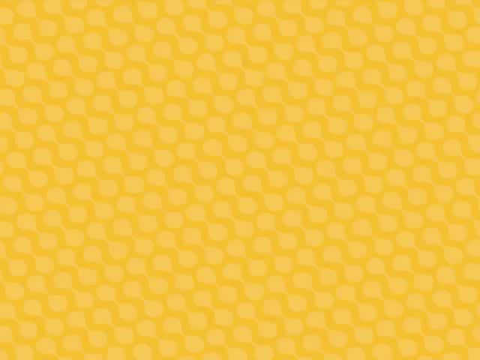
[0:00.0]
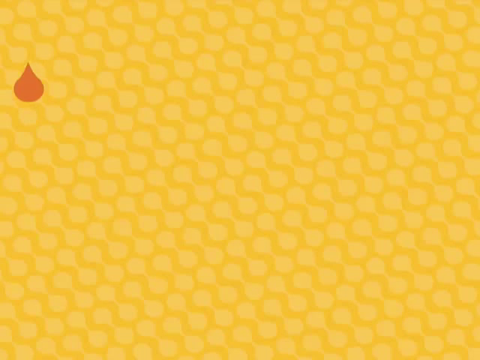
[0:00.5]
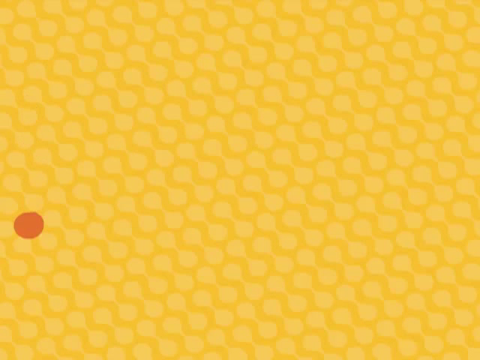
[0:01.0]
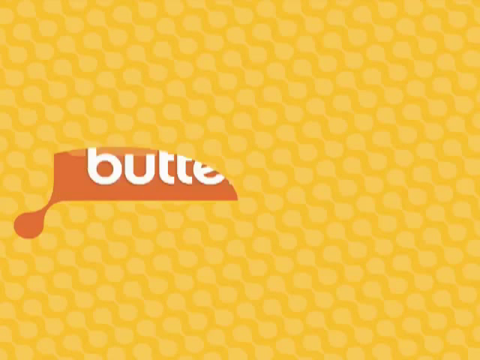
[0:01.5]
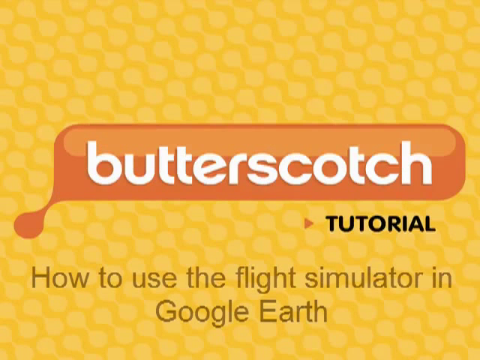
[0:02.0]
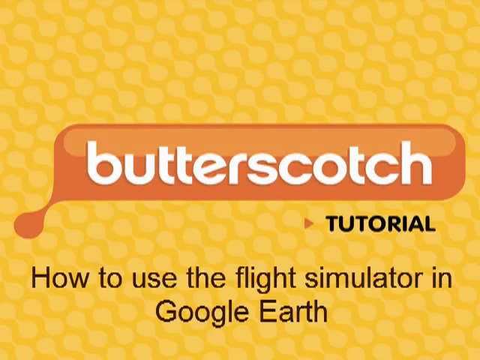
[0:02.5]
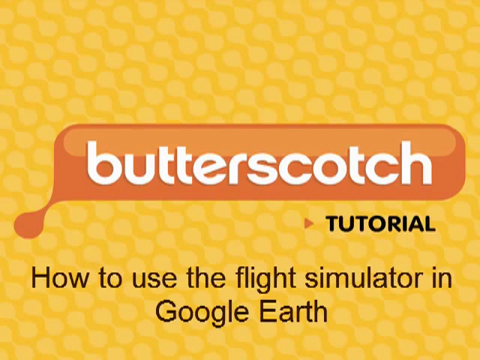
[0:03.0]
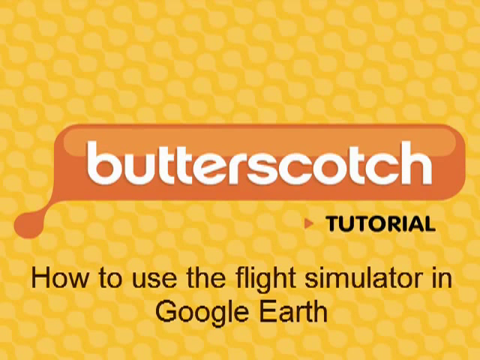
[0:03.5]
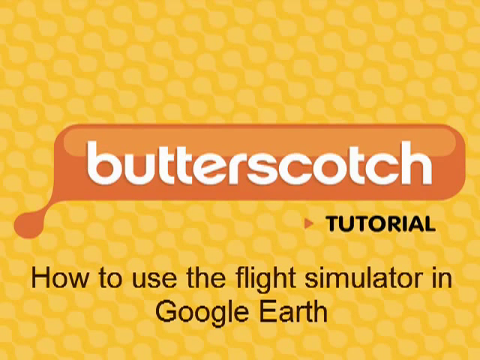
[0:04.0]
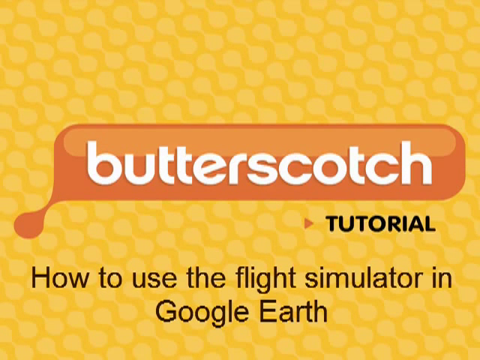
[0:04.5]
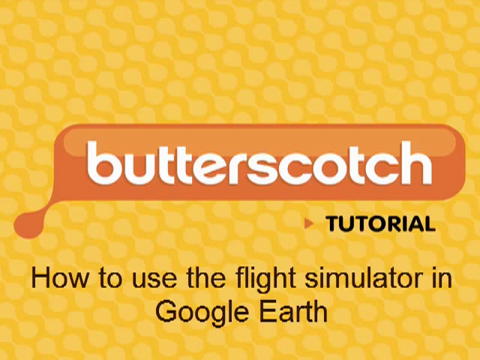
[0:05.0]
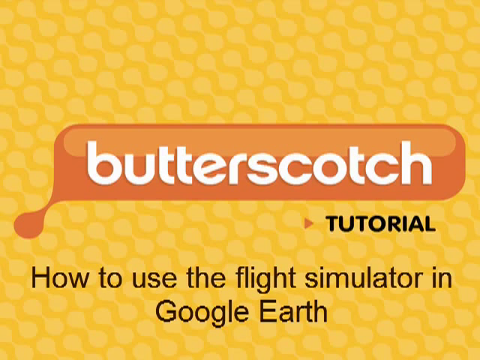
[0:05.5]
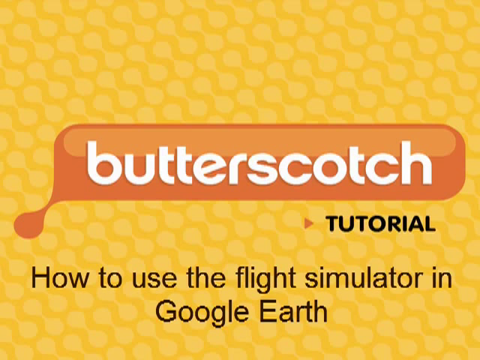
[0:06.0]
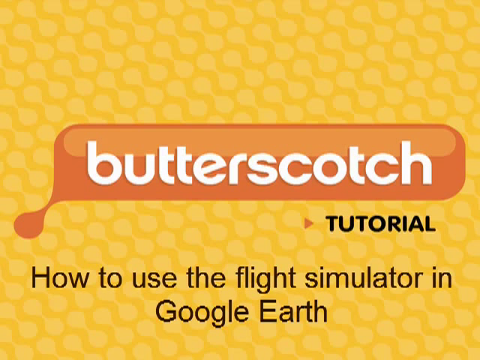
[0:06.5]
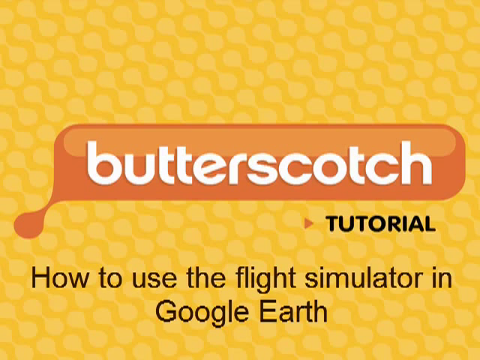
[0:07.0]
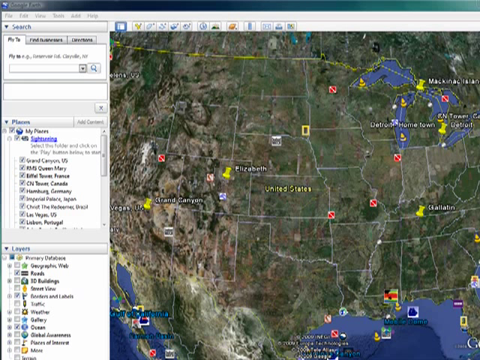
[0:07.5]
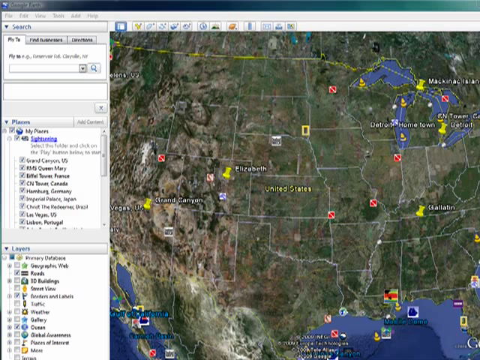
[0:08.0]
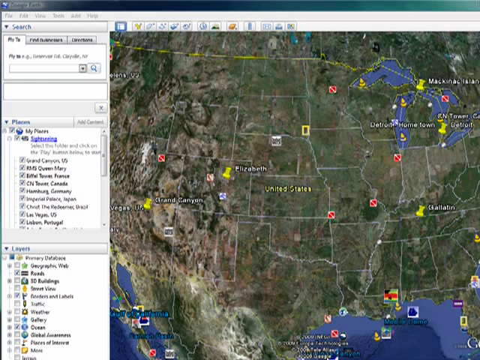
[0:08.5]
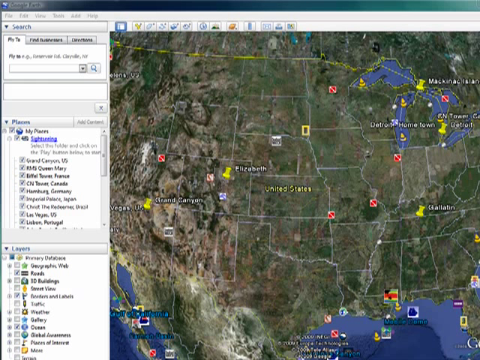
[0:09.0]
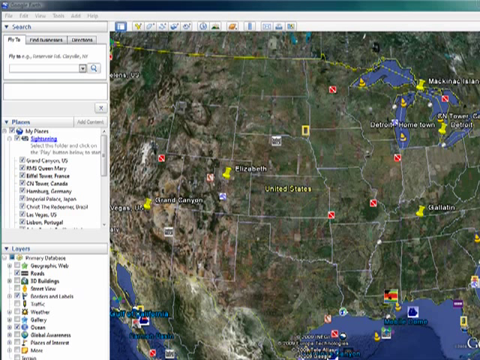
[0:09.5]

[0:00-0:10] The video opens on a patterned yellow background with a title screen that reads "Butterscotch Tutorial. How to use the flight simulator in Google Earth." The title uses a couple of different fonts: the Butterscotch logo is in white writing in front of an orange section, and the rest of the writing, such as "tutorial" and "how to use the flight simulator in Google Earth", is in black. The video then moves to a screenshot of Google Earth, which seems quite pixelated, apparently an old image, possibly from the 2000s.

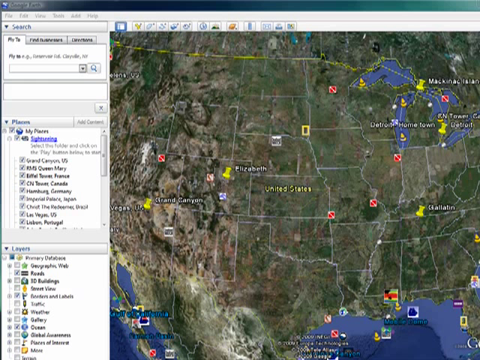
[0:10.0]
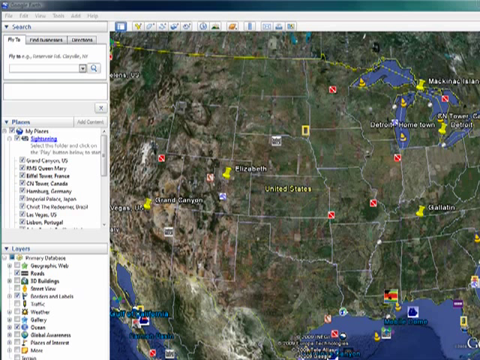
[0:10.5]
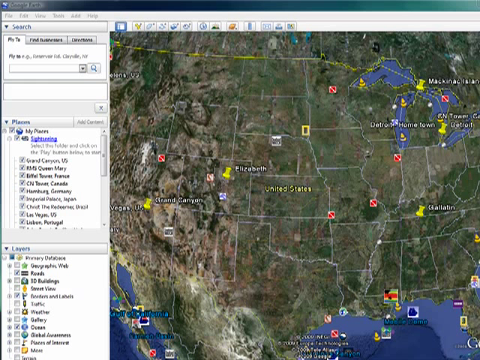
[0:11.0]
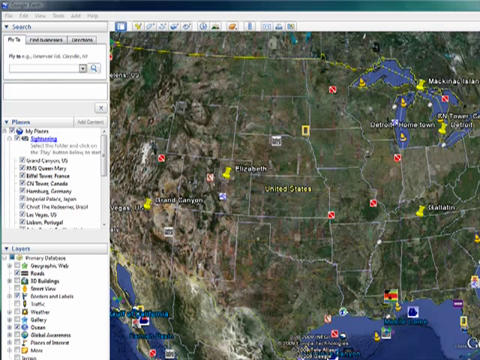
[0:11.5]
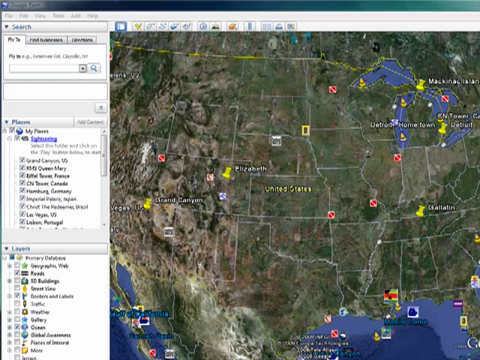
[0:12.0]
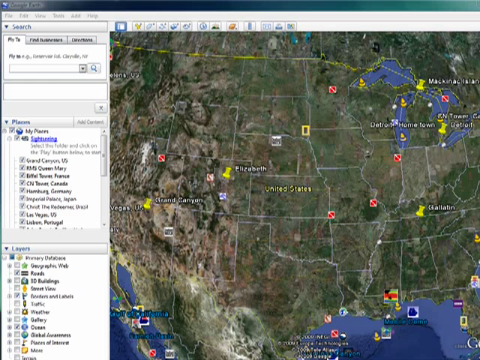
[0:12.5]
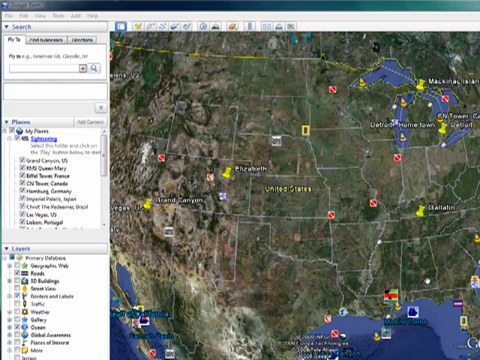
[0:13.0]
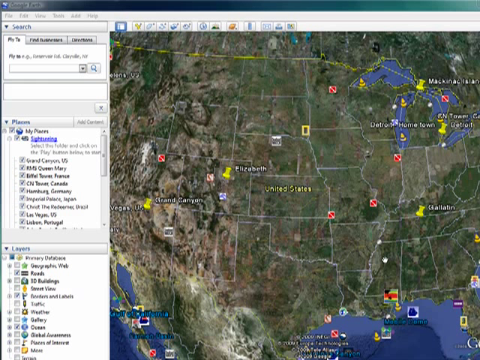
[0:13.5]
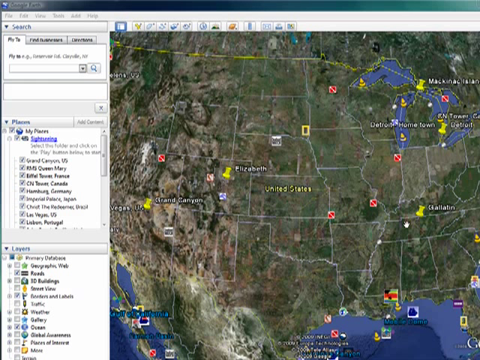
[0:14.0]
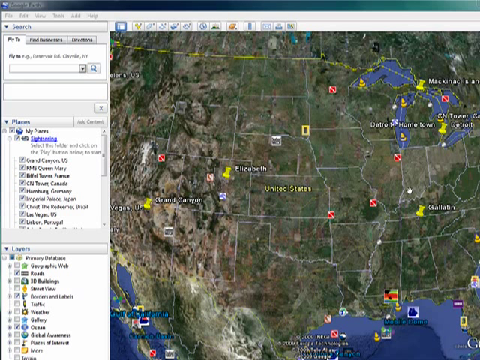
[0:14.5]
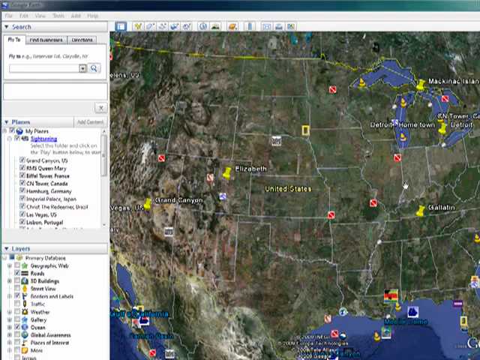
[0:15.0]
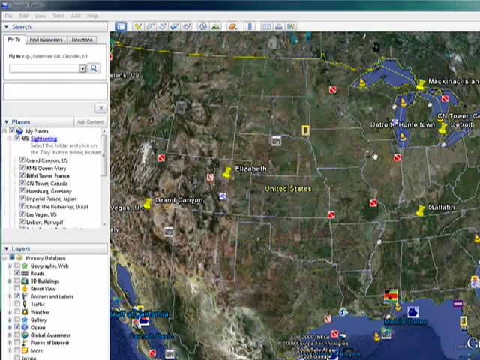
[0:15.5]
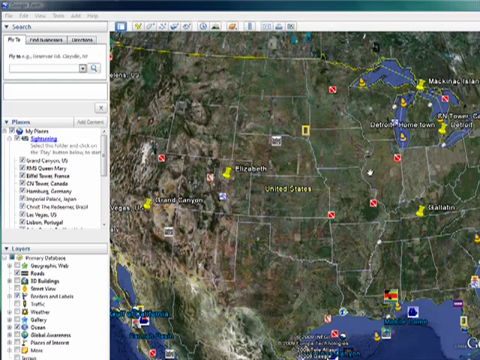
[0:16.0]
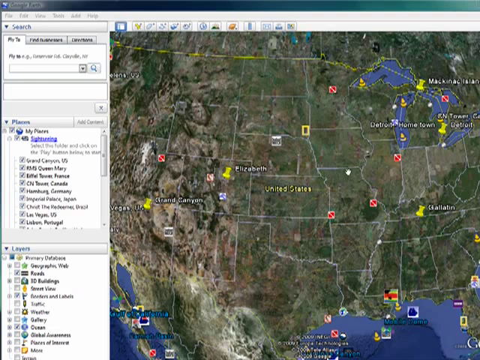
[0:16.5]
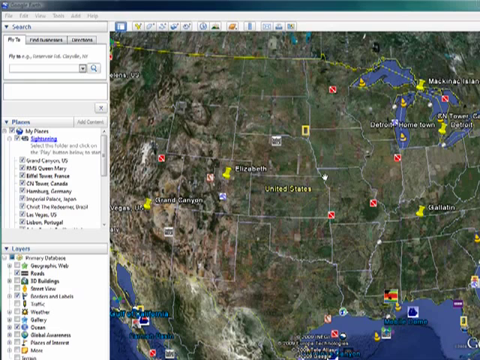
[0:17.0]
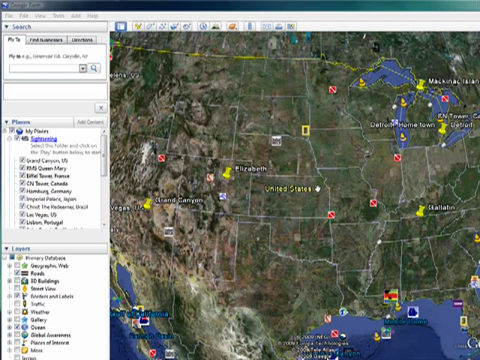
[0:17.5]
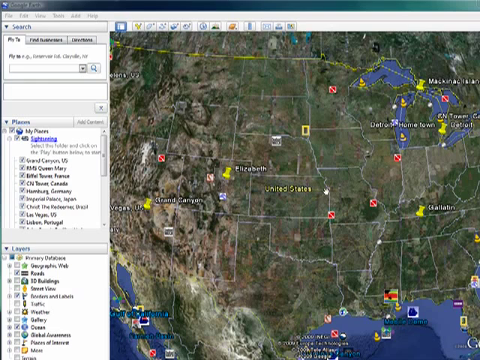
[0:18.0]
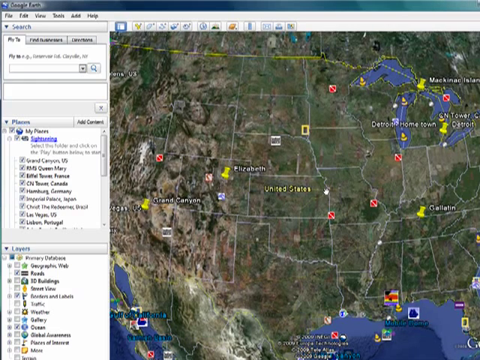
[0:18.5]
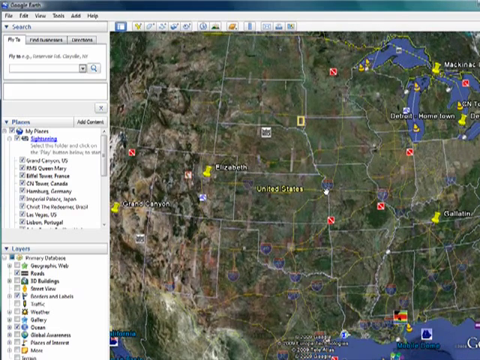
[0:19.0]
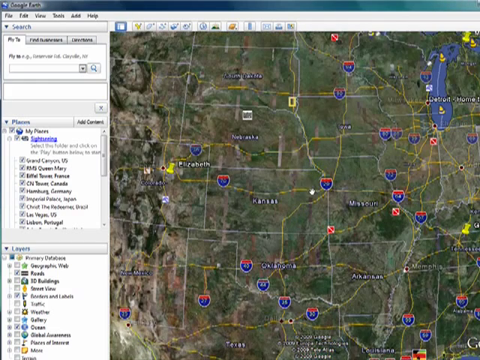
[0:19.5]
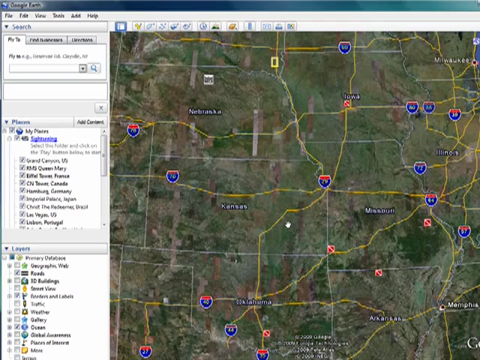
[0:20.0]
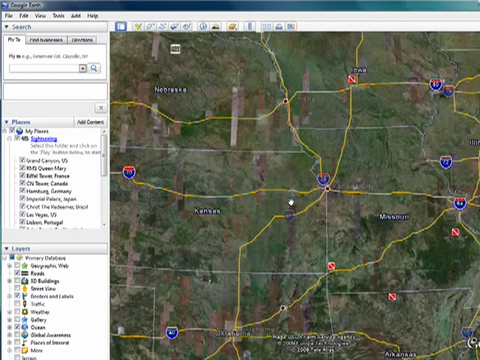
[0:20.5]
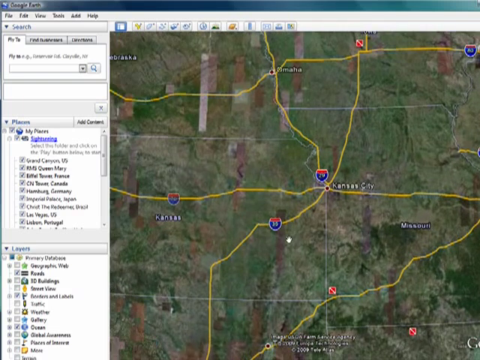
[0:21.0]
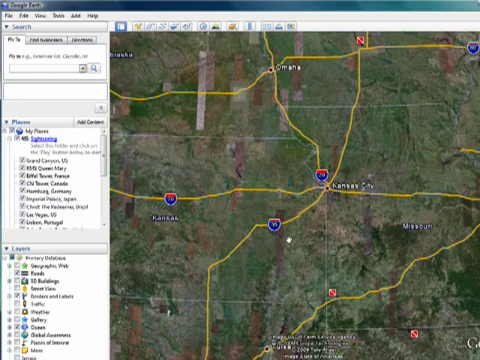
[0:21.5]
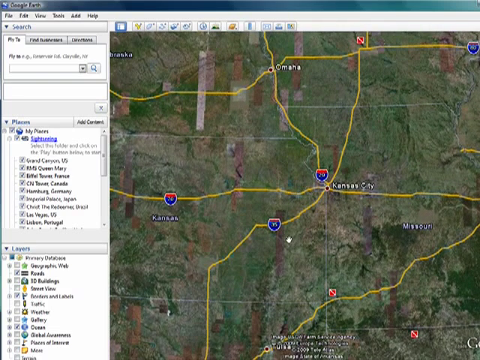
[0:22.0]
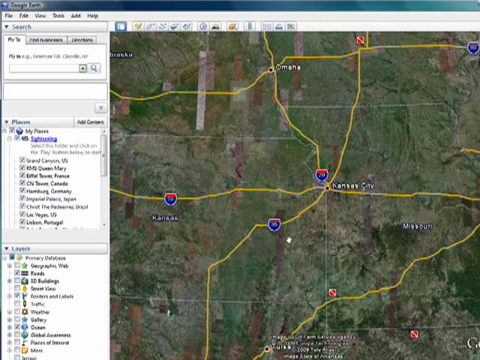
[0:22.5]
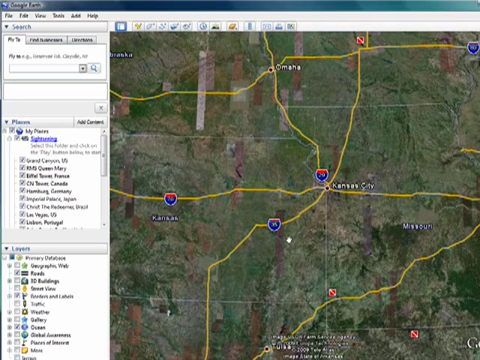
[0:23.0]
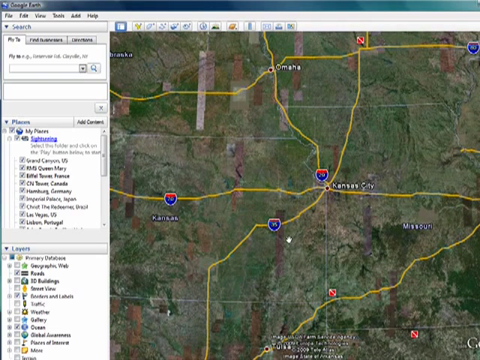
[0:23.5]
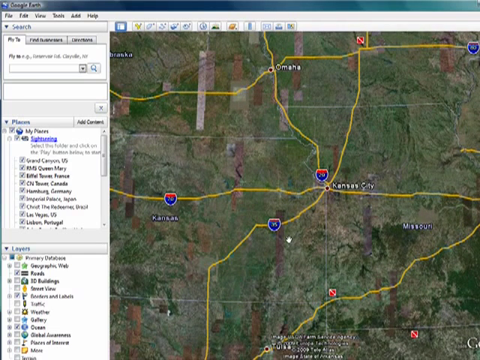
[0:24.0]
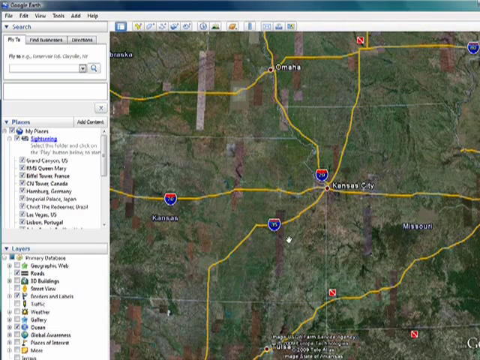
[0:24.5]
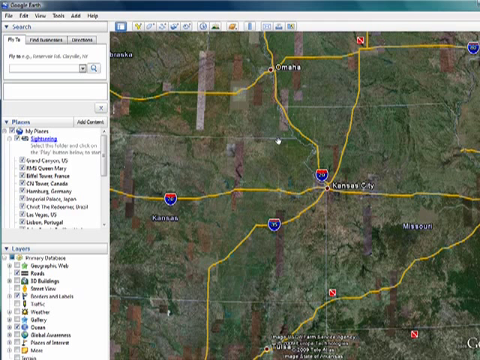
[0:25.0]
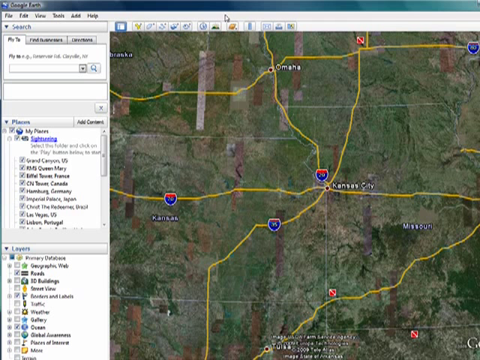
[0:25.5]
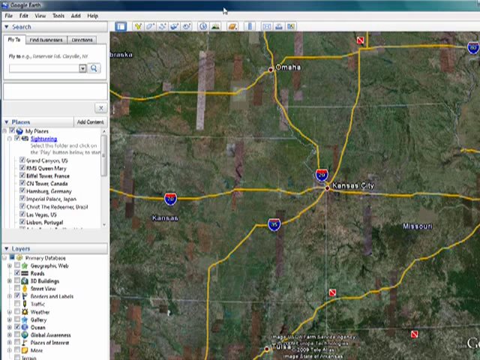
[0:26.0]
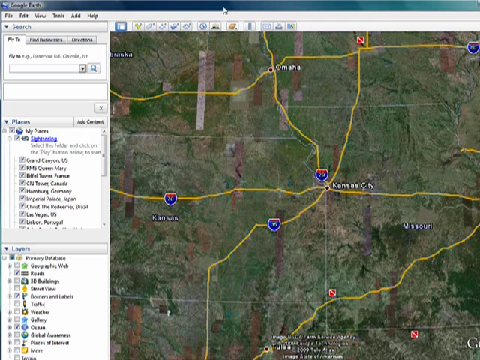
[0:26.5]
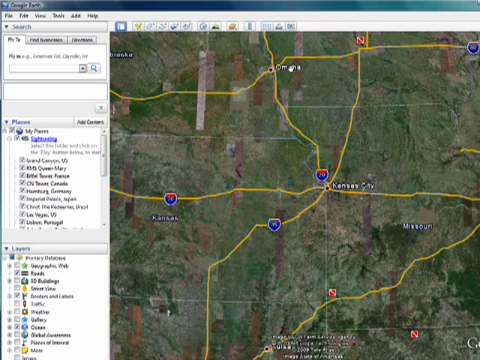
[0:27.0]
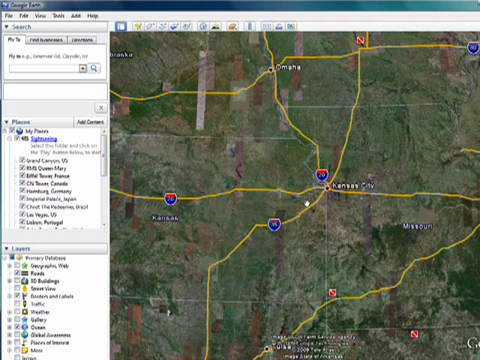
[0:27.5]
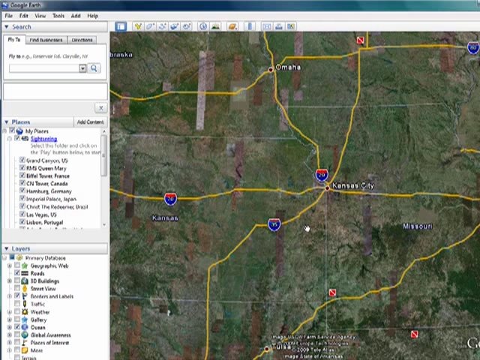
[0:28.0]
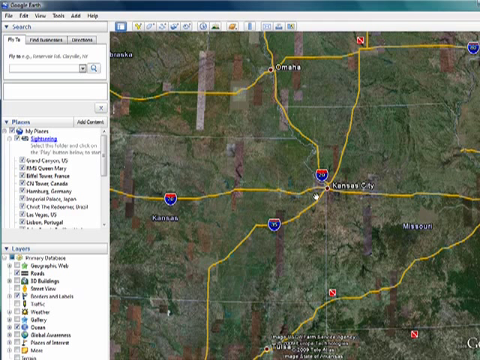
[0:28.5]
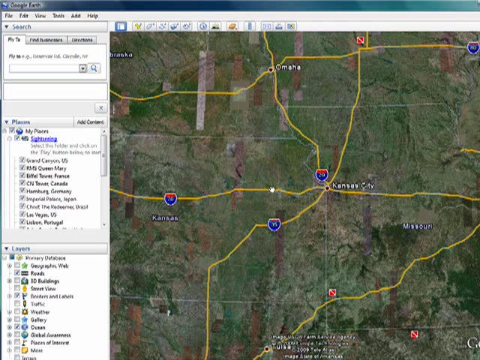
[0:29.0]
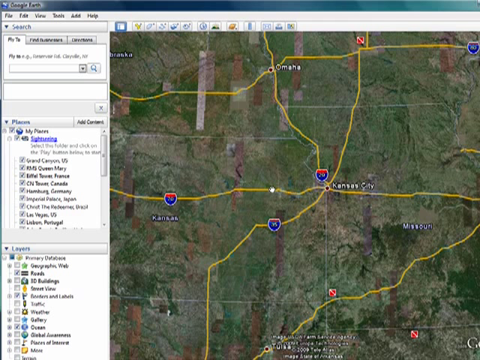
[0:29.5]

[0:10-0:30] The Google Earth screenshot shows a map of the United States with all of the states outlined. A few yellow pins mark landmarks; one is the Grand Canyon, and others say Elizabeth, Detroit and hometown. On the left-hand side there is a toolbar and a search bar, and along the top are menu items including file, edit, view, table and audio, plus another that is hard to see because of the pixelation. None of these buttons are used; the view simply zooms in with the mouse toward the center of the United States, into the Kansas City area.